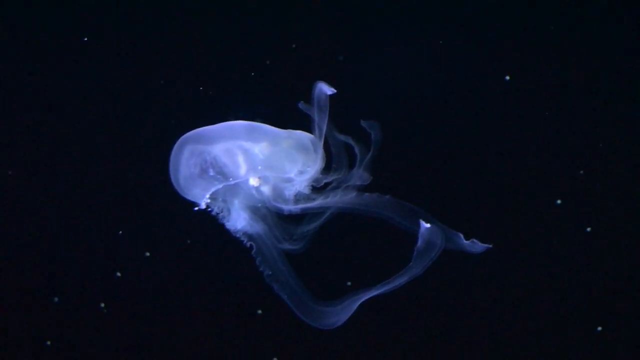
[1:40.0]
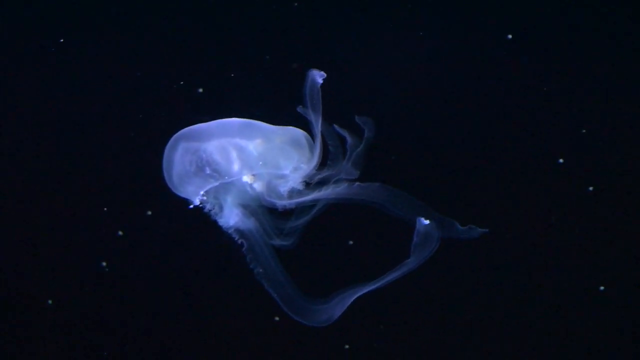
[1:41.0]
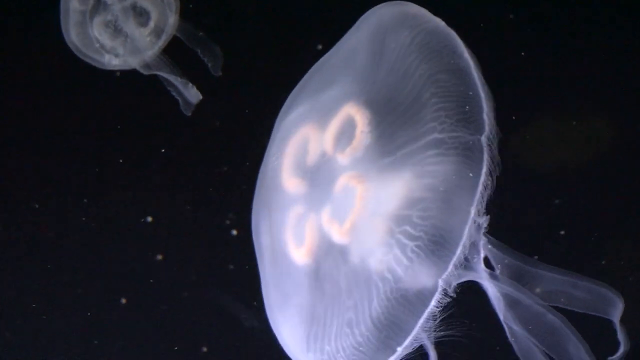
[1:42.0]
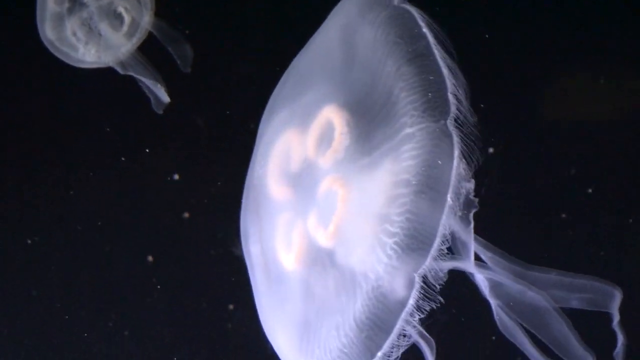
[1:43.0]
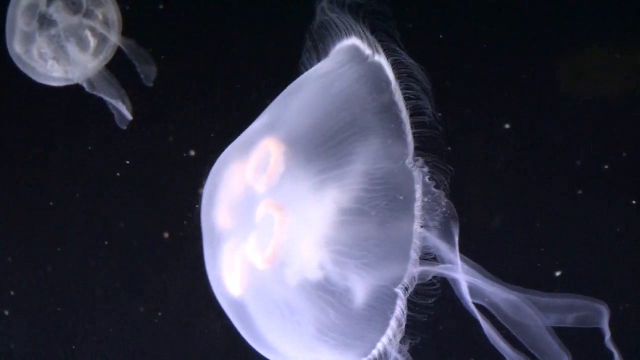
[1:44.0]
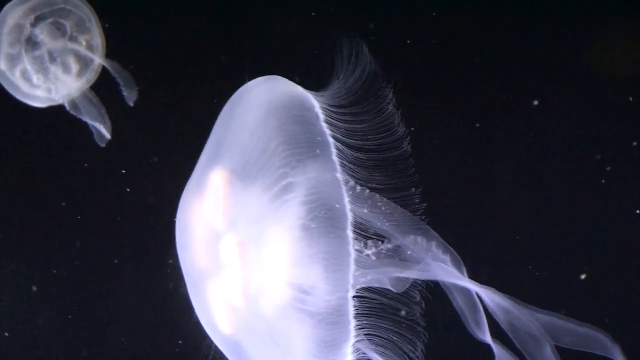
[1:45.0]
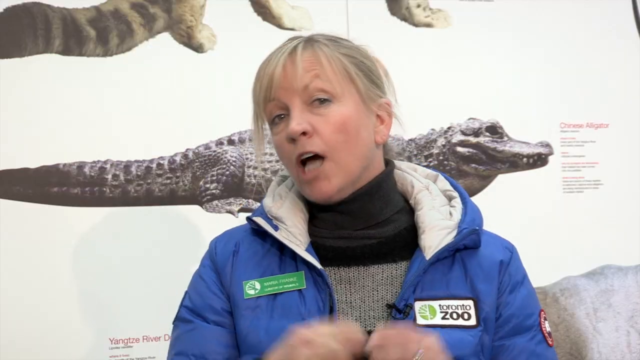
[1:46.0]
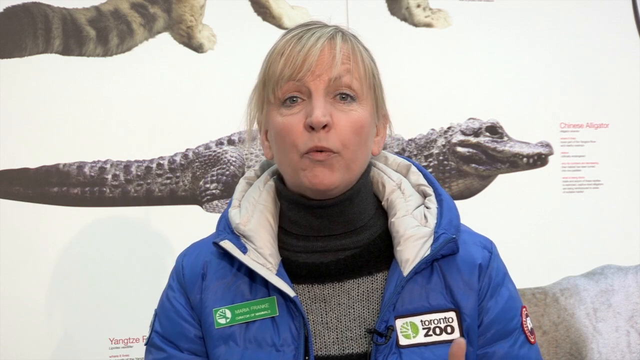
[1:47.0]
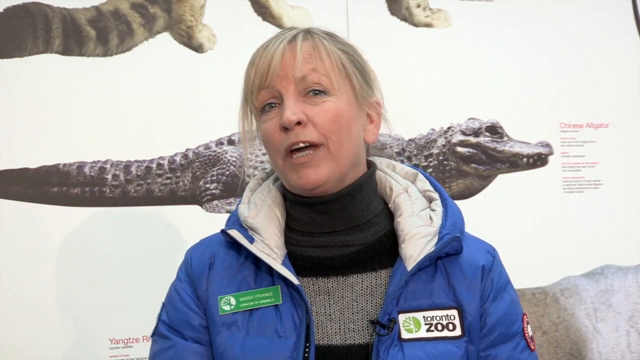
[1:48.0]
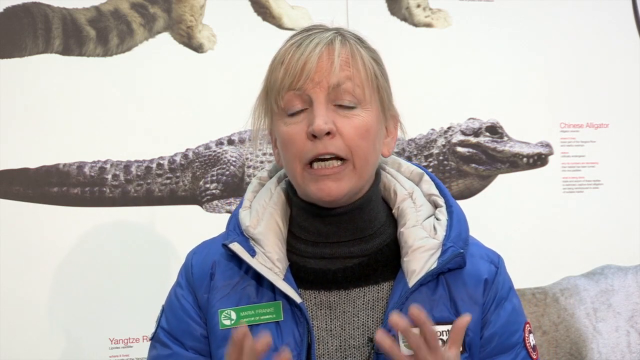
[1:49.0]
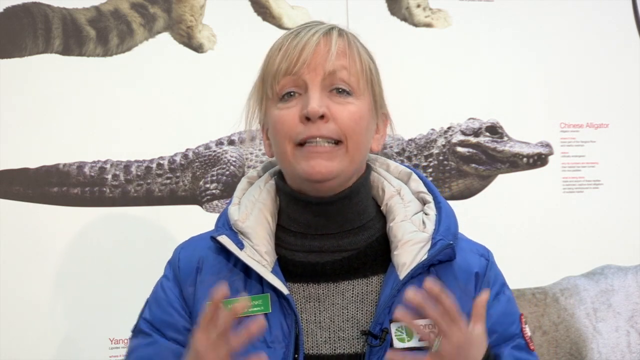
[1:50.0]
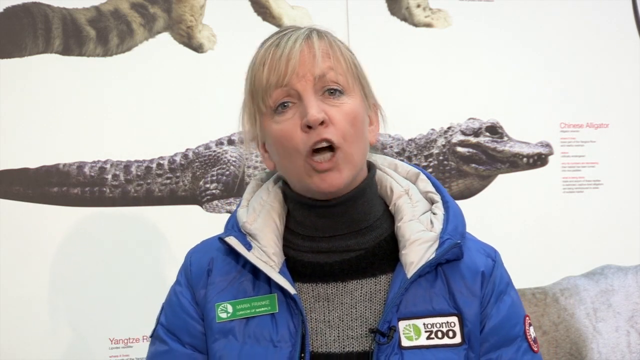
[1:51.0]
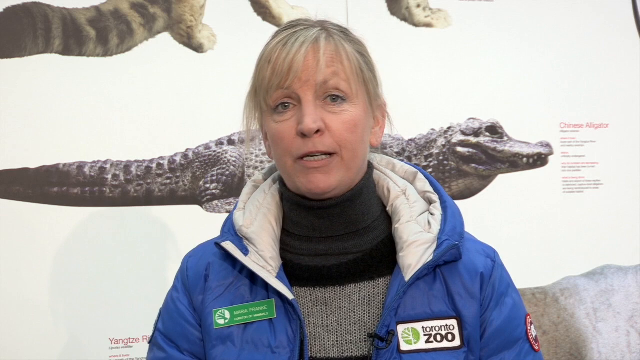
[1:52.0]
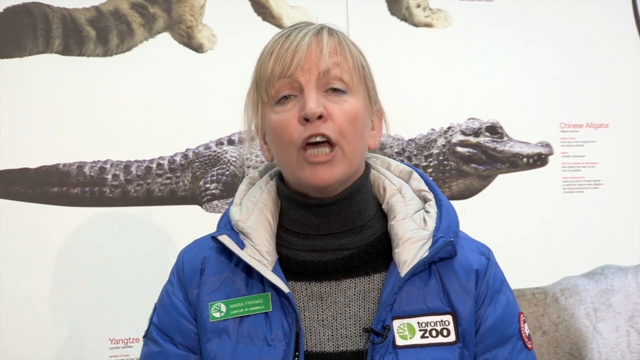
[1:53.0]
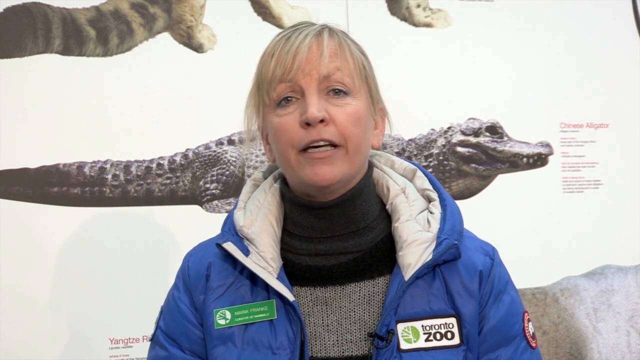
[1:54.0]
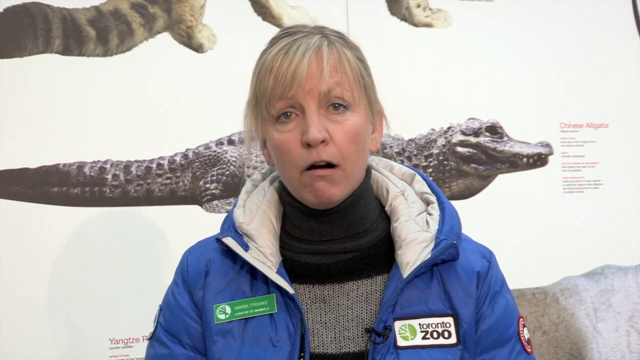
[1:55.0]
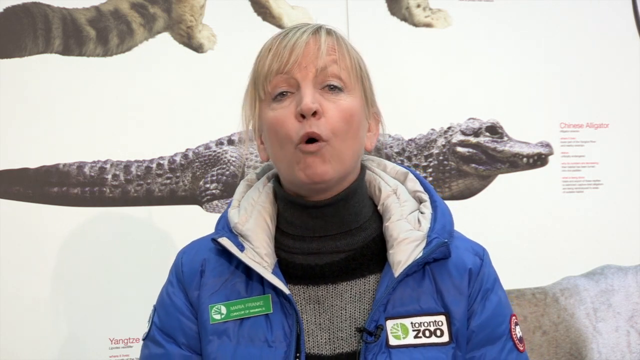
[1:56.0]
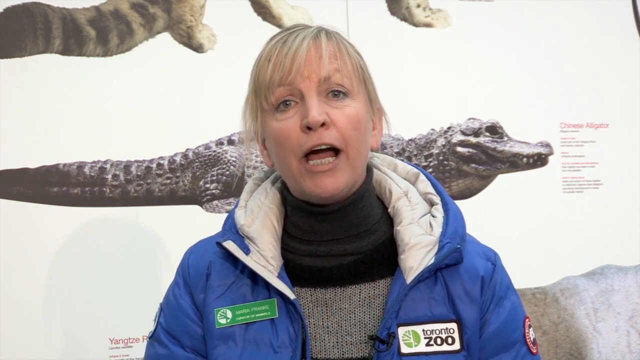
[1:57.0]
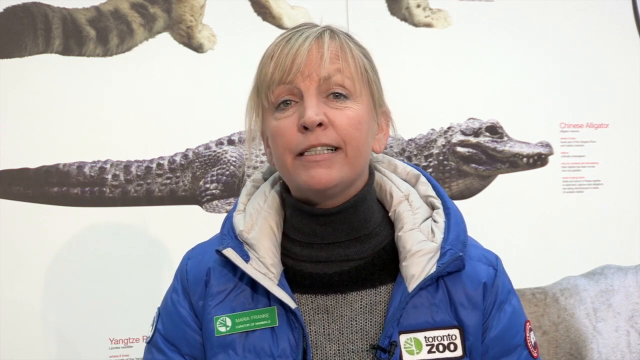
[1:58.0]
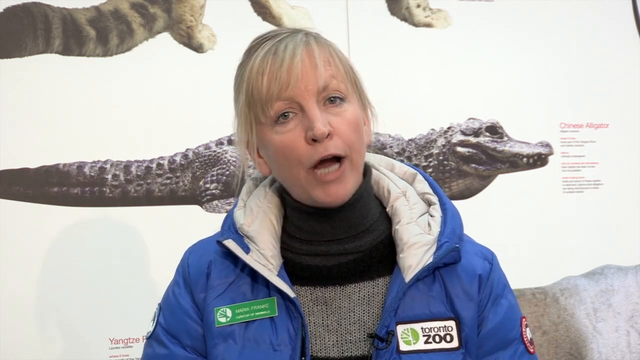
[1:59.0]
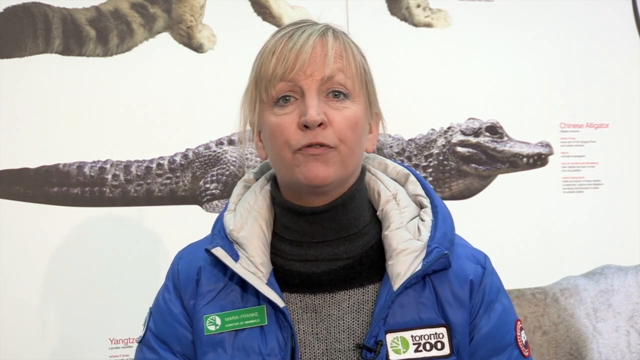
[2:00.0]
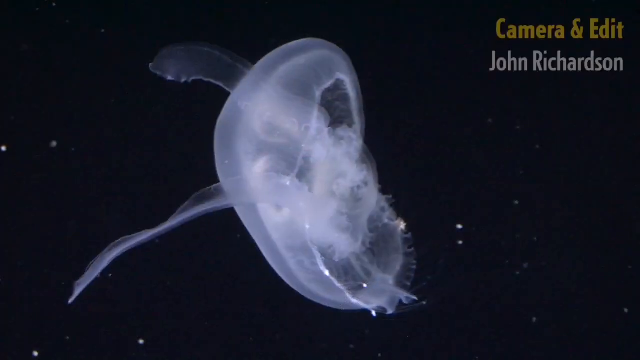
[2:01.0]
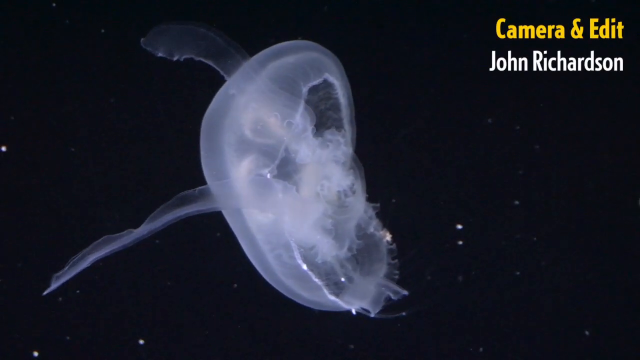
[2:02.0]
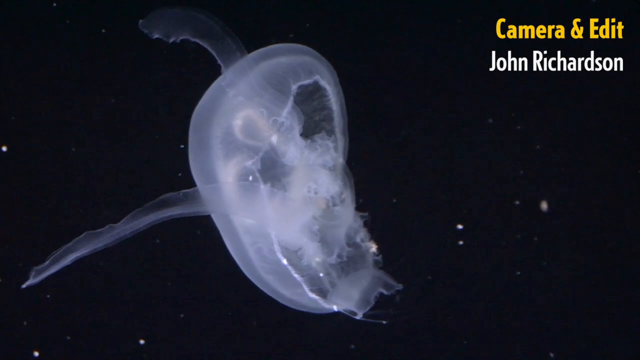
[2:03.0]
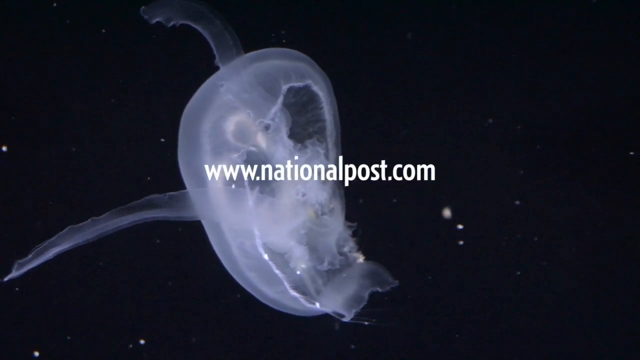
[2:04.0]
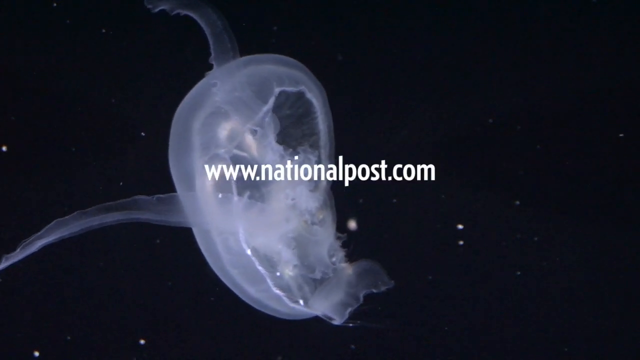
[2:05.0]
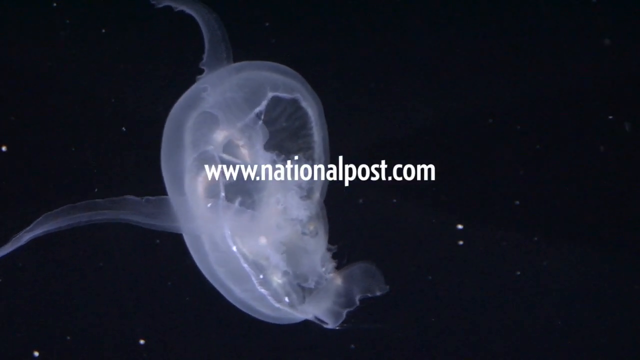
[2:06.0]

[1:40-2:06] Moon jellies are shown in the water. The video transitions back to the woman, an employee of the Toronto Zoo, with a baby crocodile, alligator or caiman behind her. She is a Caucasian woman around 45 with short, wispy blonde hair and a blue jacket, and she is talking. The video then transitions to the moon jellies with text that says "camera and edit John Richardson www.nationalpost.com", giving the camera and editing credit and a URL at the end.